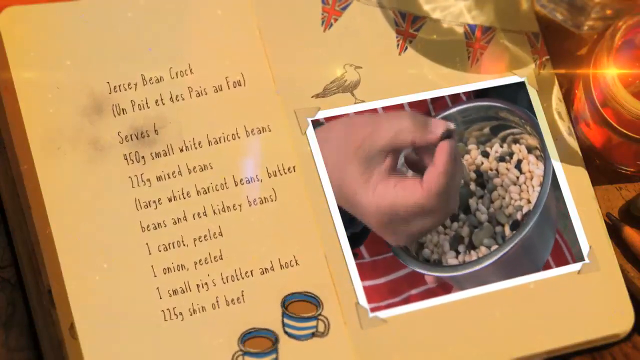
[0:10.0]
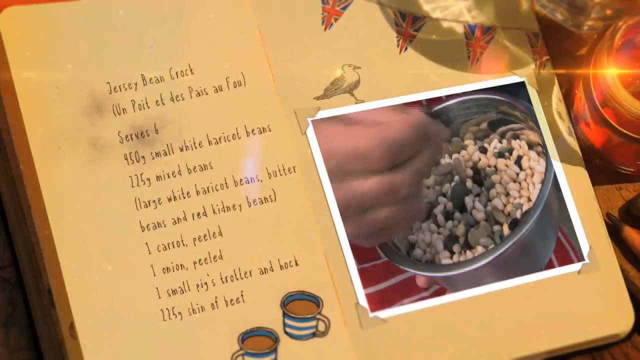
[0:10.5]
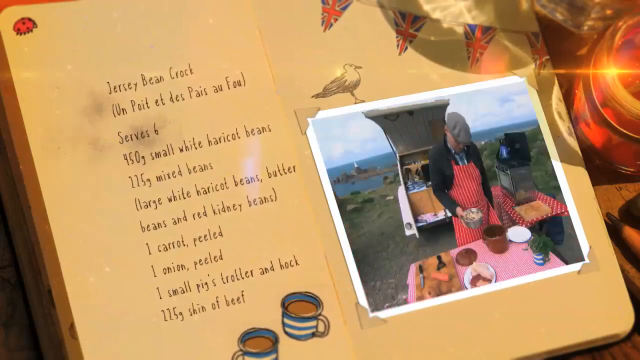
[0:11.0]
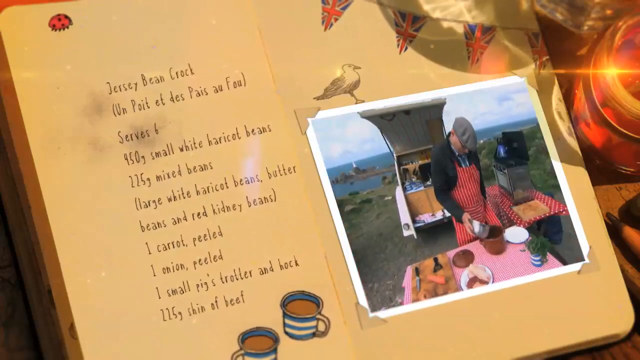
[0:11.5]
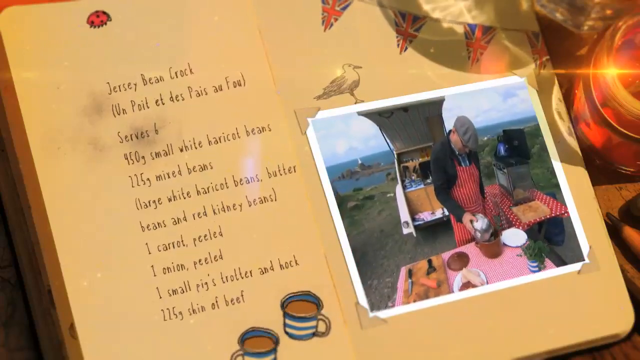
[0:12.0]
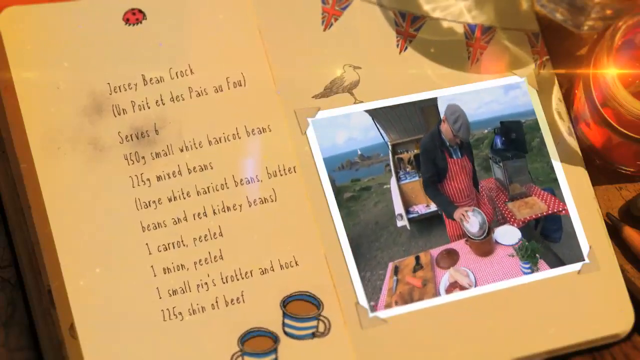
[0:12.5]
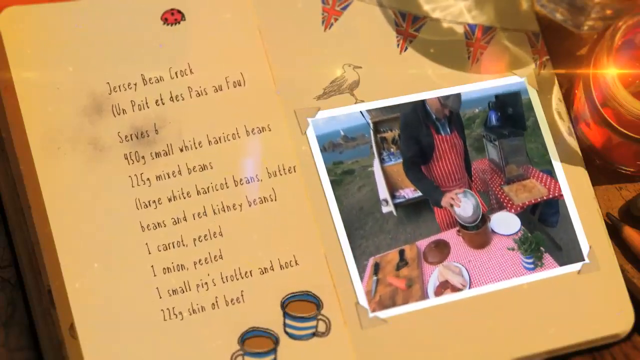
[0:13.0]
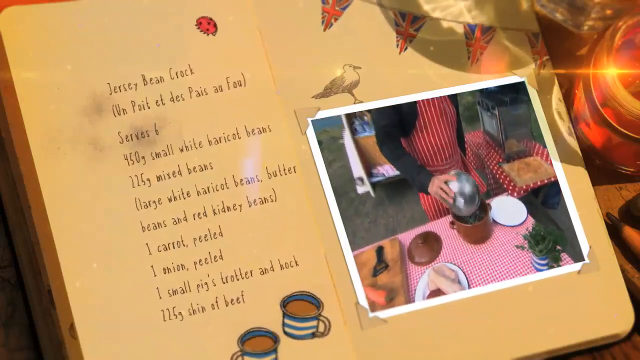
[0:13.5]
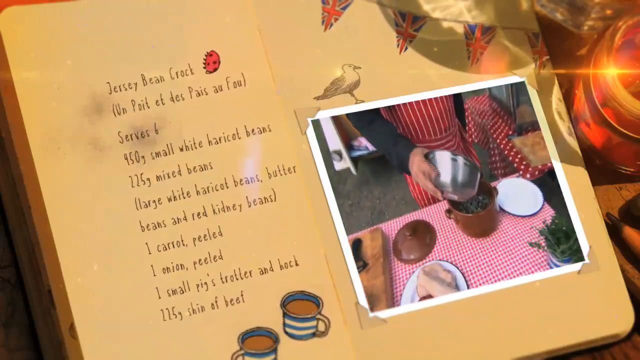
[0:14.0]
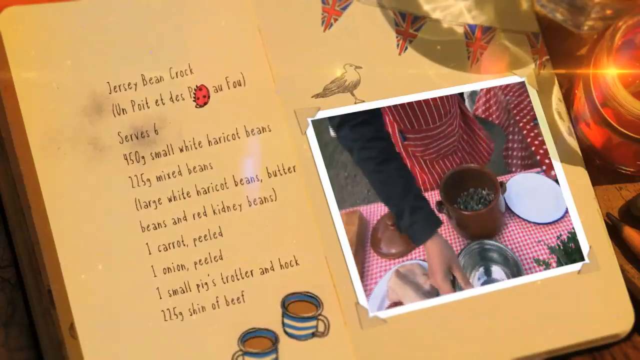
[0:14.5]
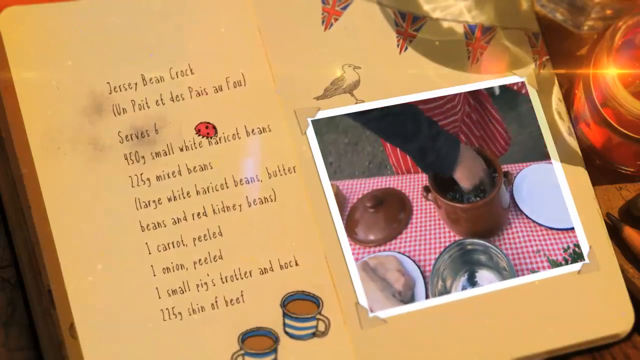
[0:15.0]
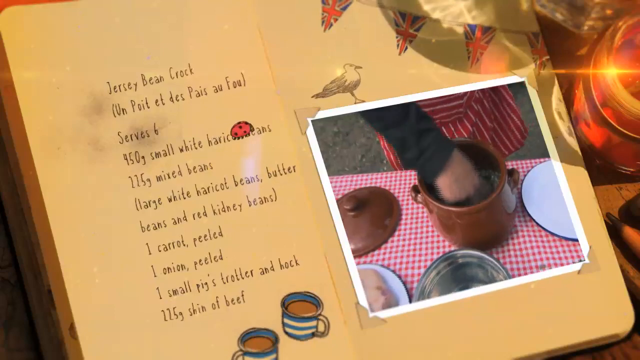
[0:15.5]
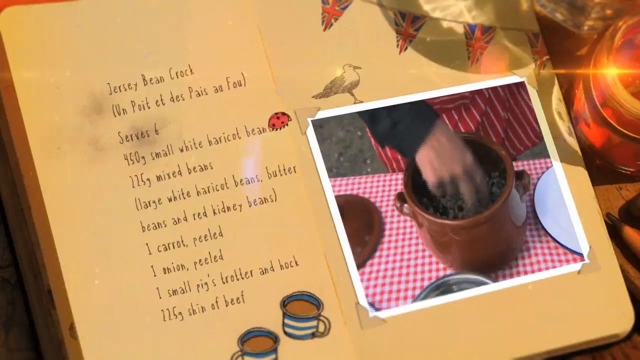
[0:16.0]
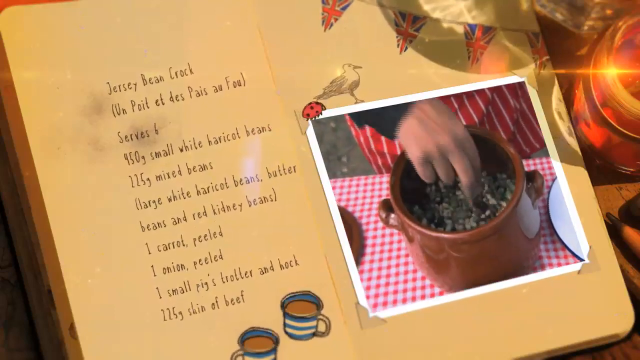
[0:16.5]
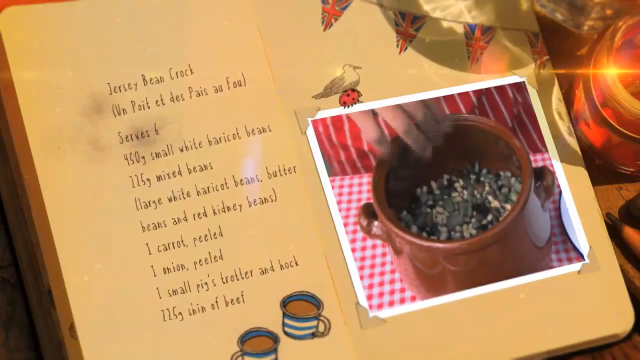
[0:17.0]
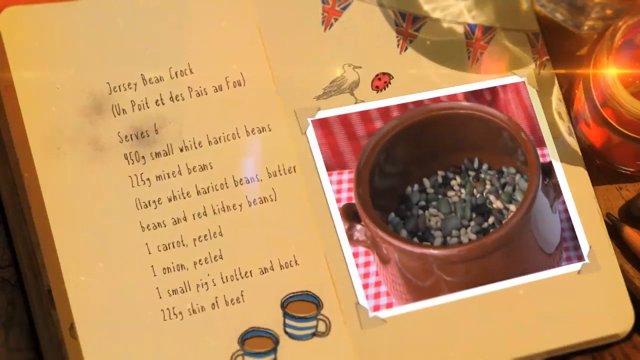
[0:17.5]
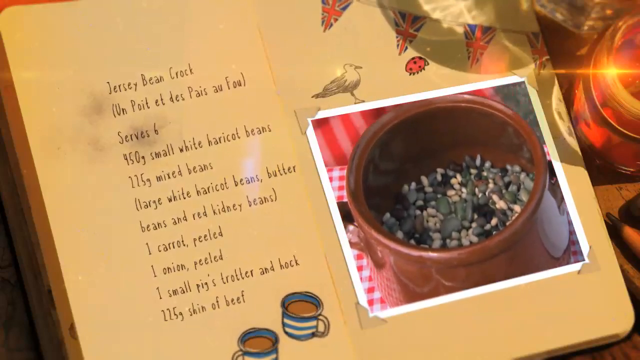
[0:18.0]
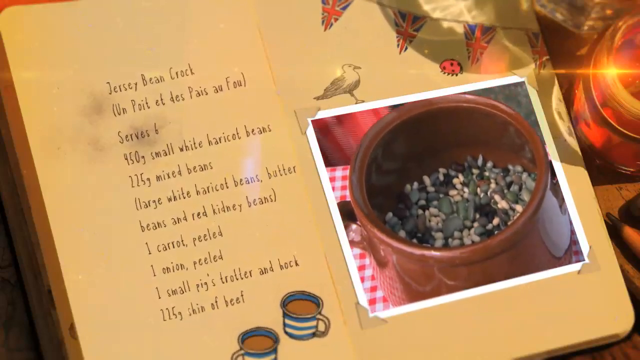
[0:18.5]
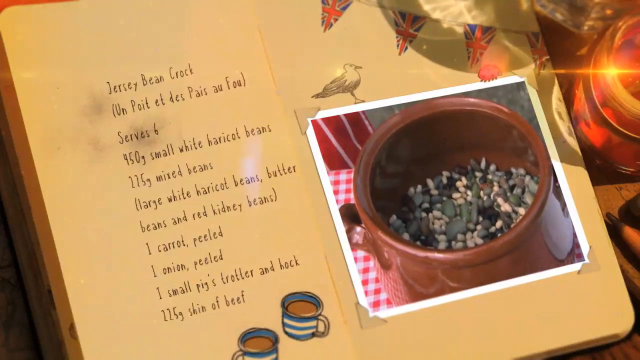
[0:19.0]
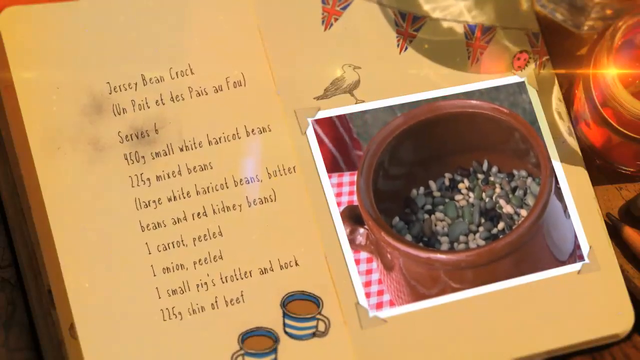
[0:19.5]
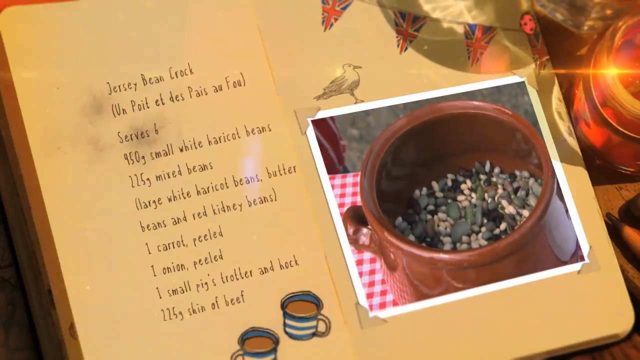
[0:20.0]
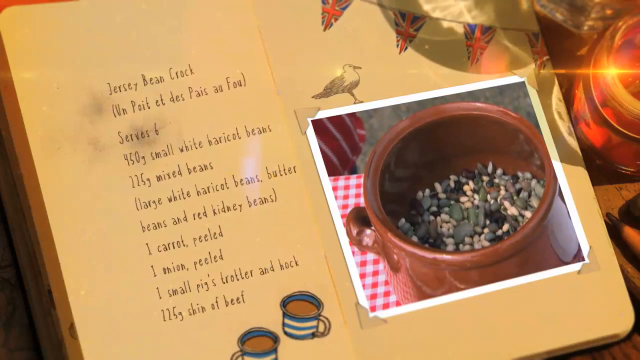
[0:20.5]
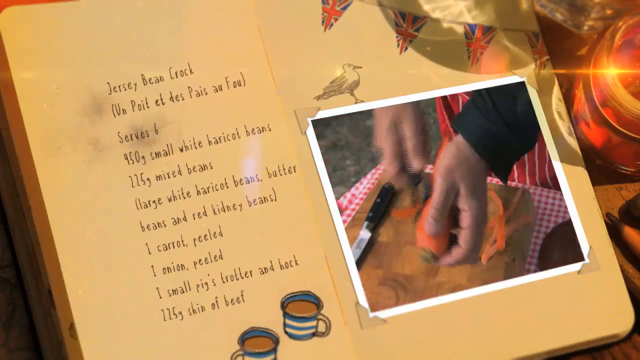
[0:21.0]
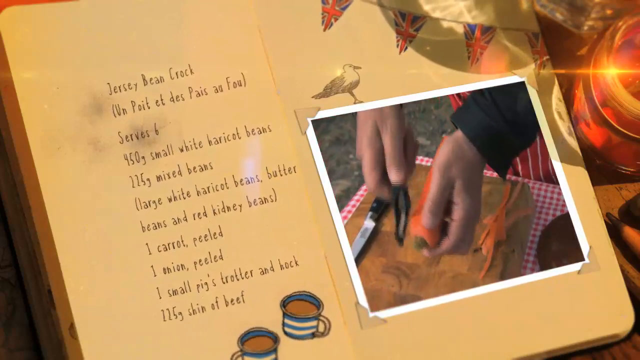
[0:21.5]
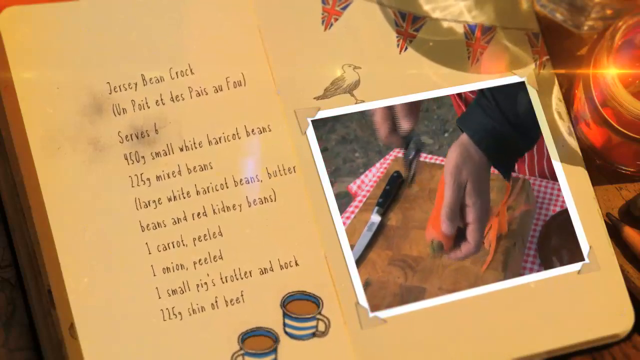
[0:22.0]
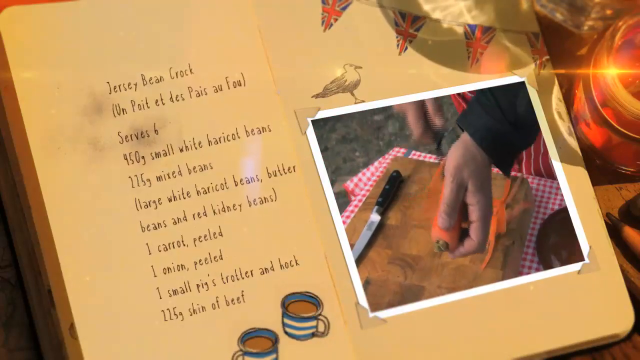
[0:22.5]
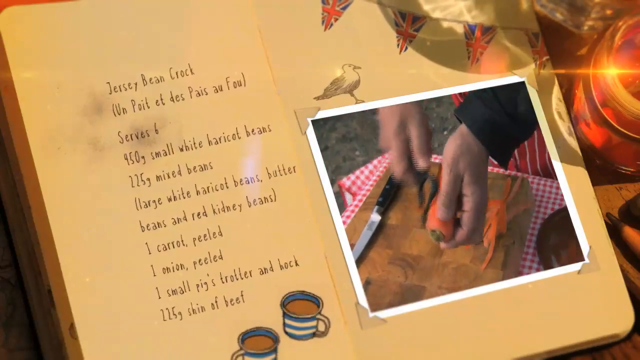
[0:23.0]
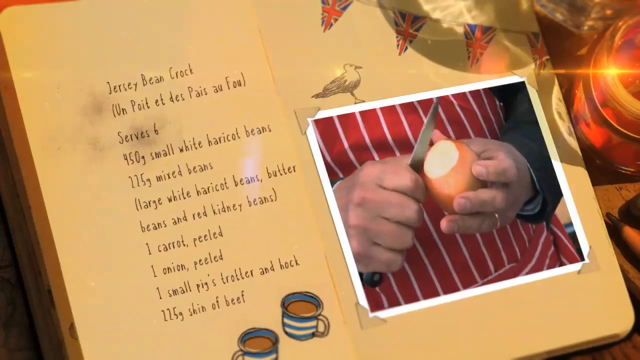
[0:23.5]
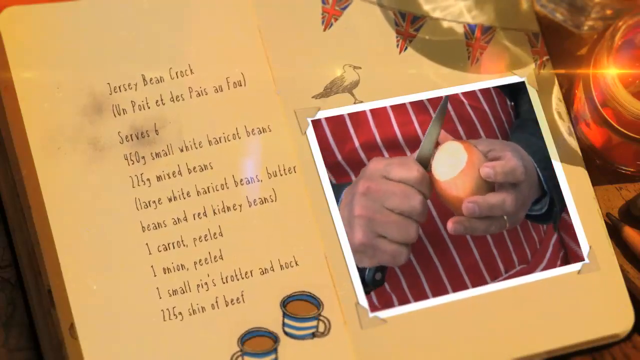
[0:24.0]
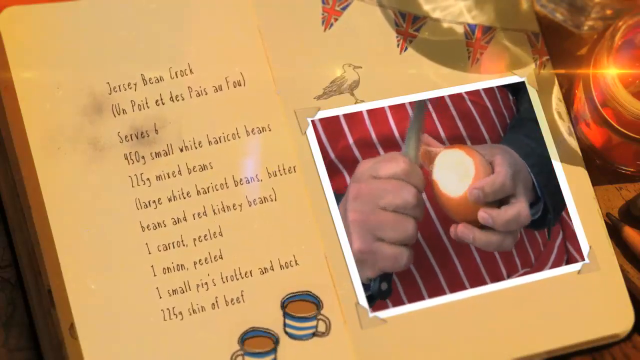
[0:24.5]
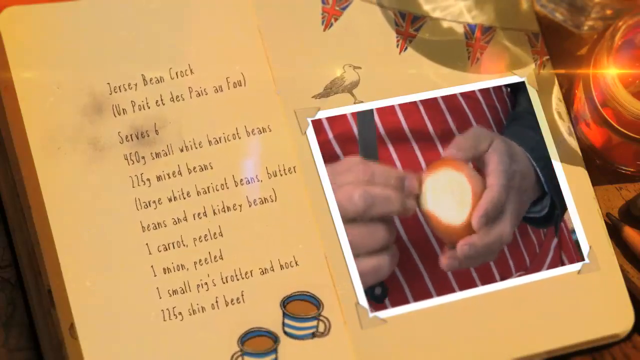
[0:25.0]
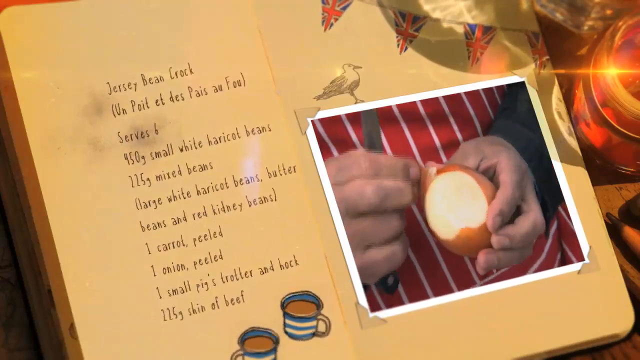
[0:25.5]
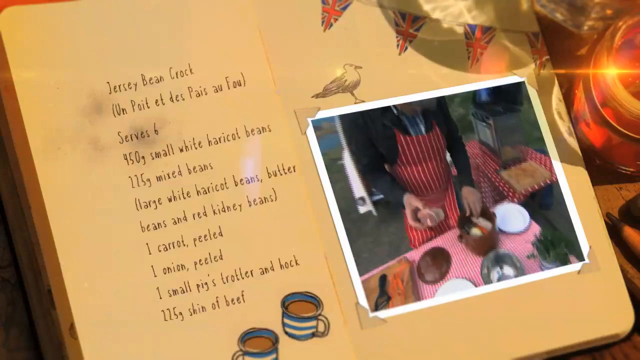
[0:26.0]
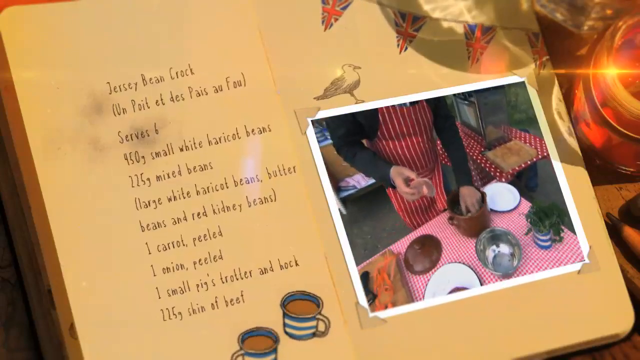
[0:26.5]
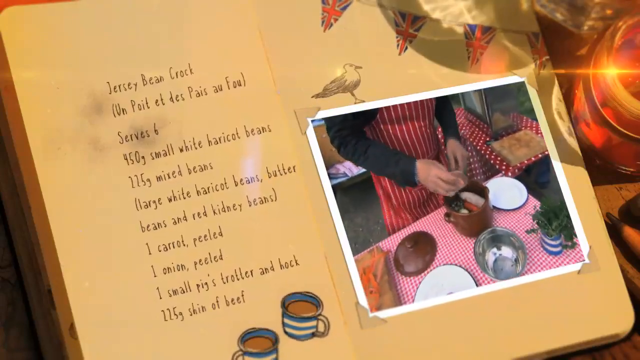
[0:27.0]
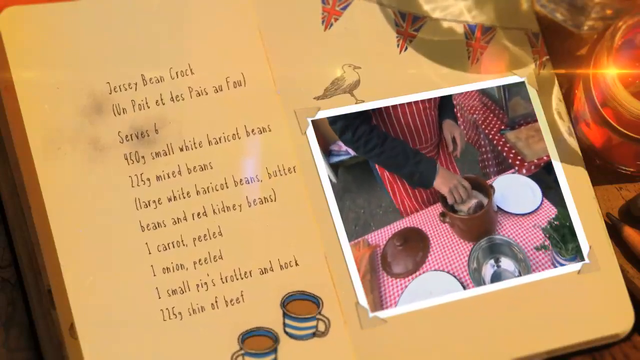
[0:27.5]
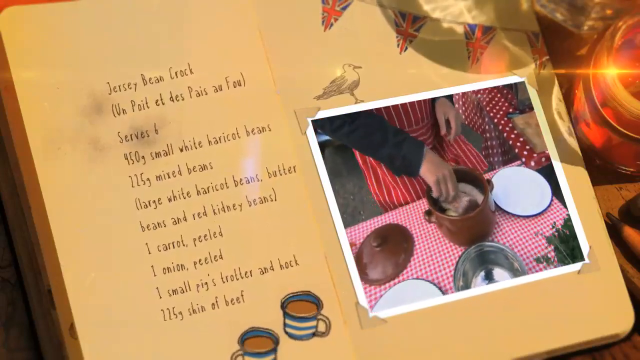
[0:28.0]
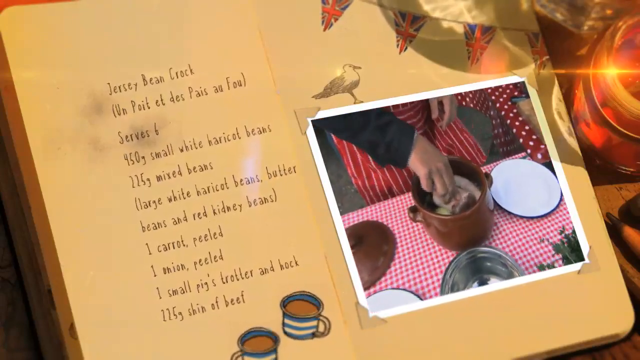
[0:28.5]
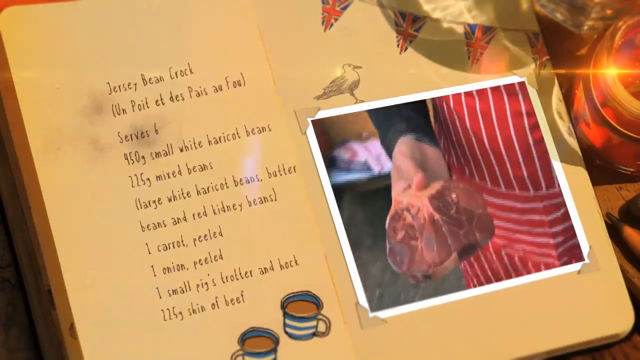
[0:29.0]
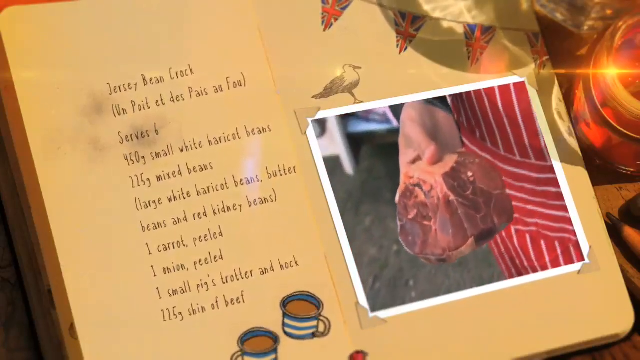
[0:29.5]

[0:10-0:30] In the moving picture, the chef pours the mixture into a casserole dish and mixes it with his hands or fingers, working outside on a picnic table. He peels a carrot on top of a cutting board, then peels an onion with a knife, and tosses all of it into the casserole dish along with chunks of meat. Things go by quickly. He wears a red striped apron over a black jacket and a small hat on his head. The park looks like it overlooks the sea or a lake. There is a grill next to him, and behind him is his car with the trunk open.